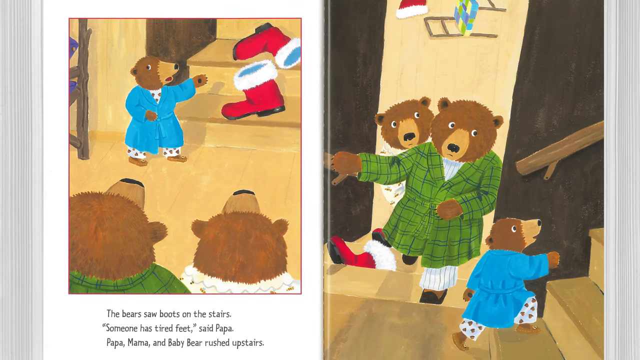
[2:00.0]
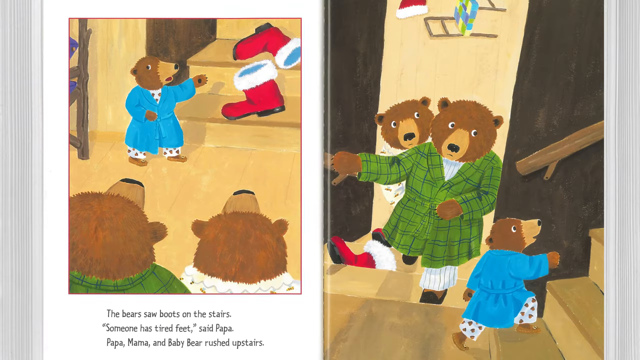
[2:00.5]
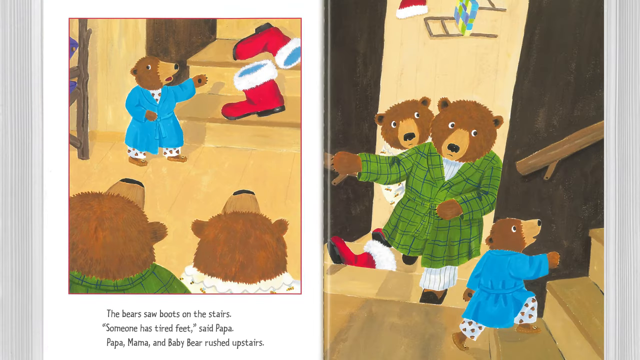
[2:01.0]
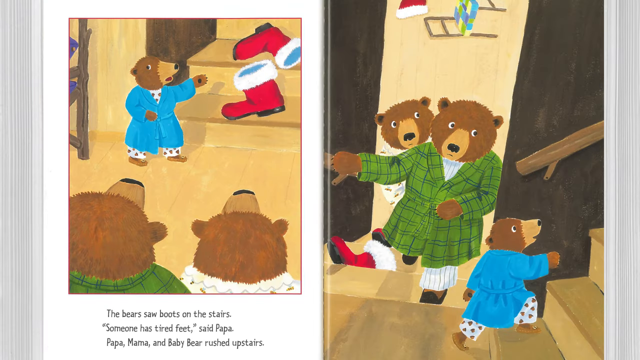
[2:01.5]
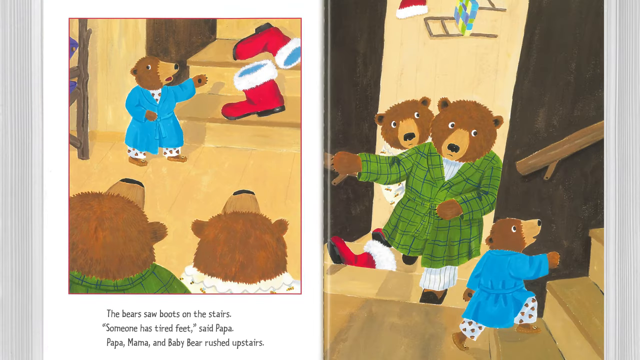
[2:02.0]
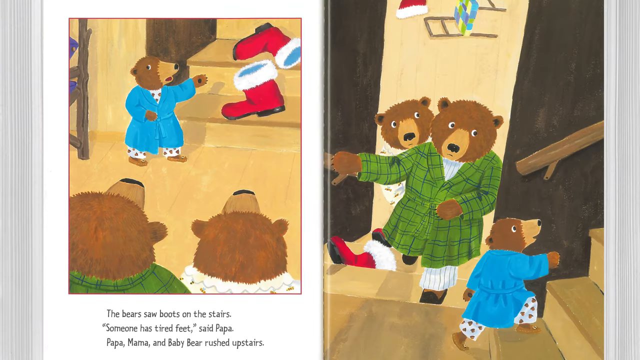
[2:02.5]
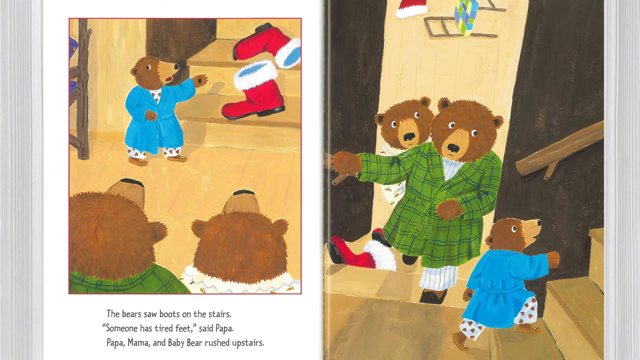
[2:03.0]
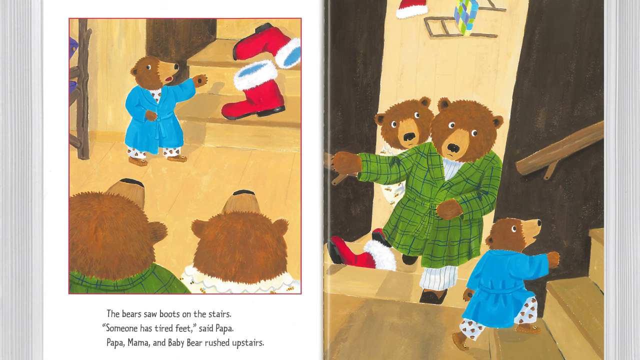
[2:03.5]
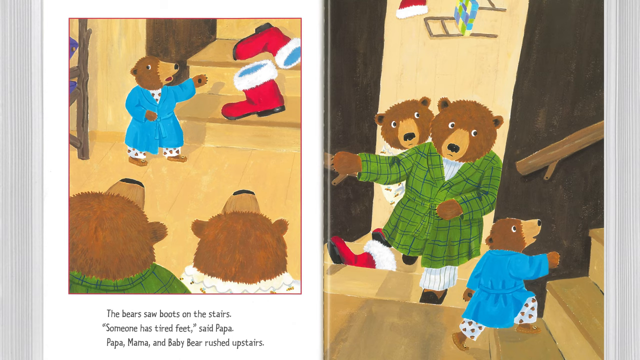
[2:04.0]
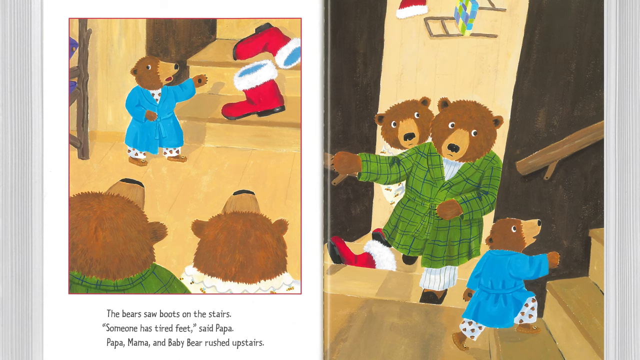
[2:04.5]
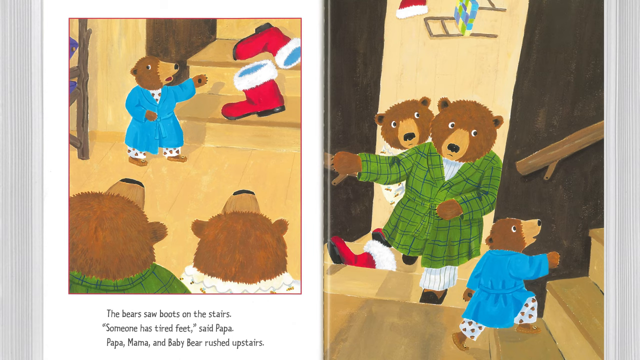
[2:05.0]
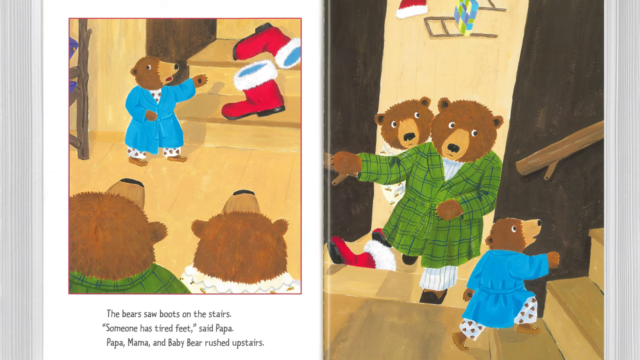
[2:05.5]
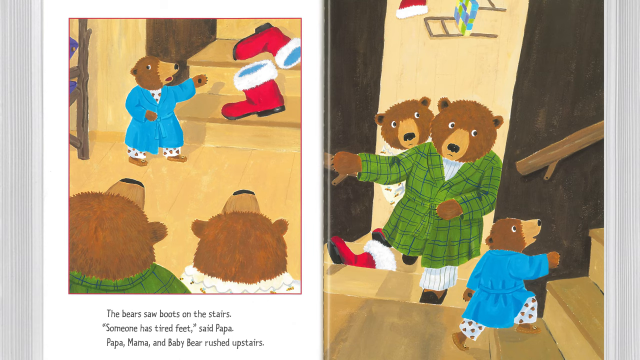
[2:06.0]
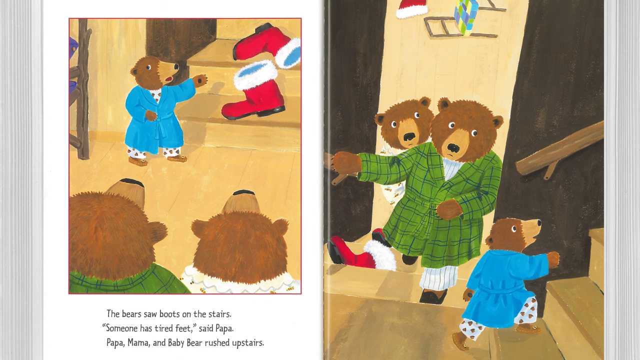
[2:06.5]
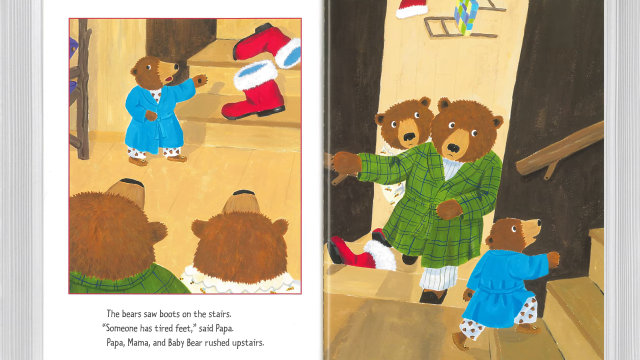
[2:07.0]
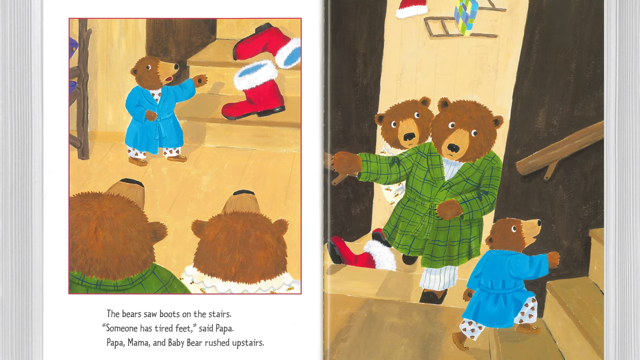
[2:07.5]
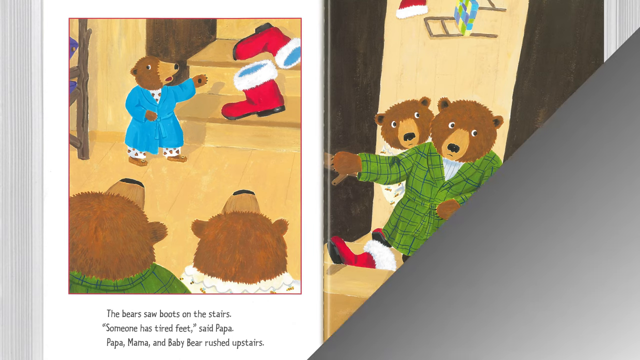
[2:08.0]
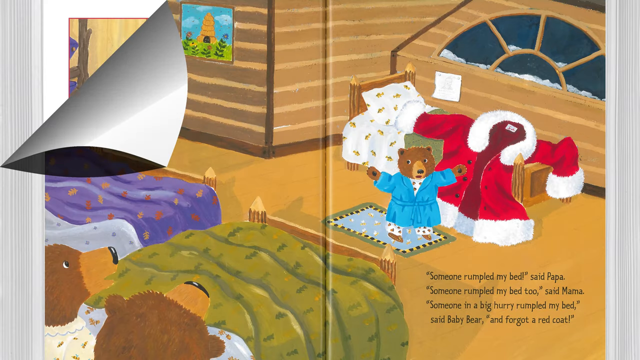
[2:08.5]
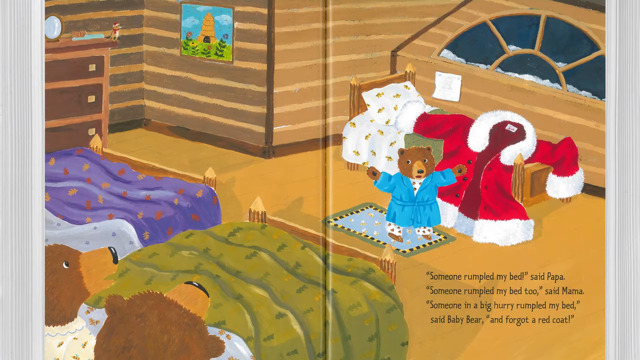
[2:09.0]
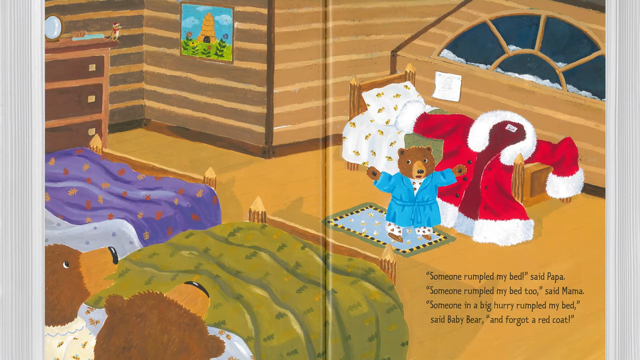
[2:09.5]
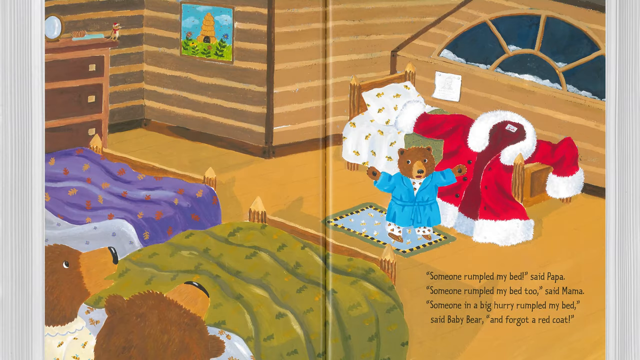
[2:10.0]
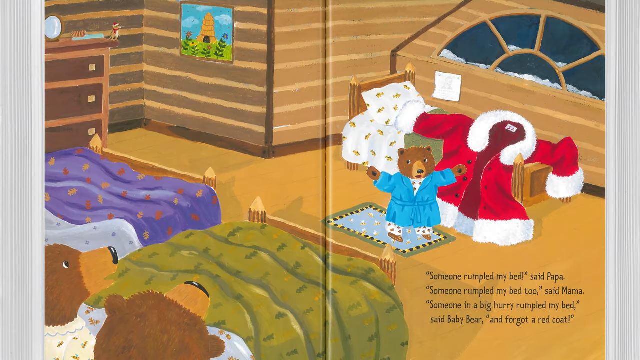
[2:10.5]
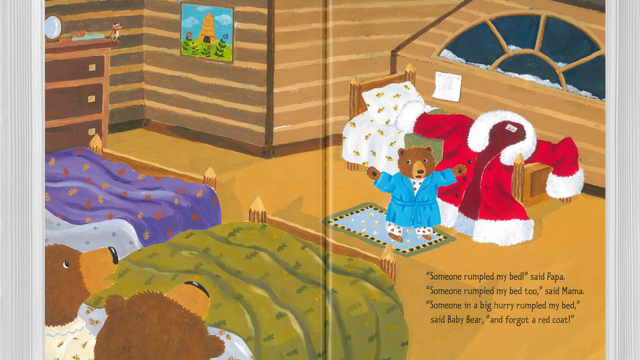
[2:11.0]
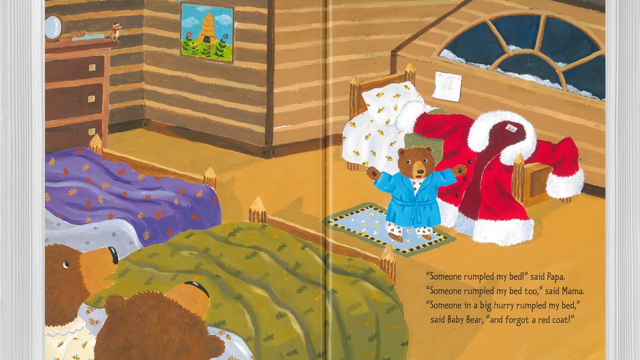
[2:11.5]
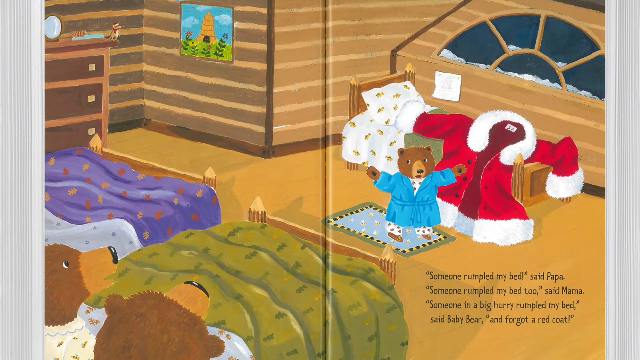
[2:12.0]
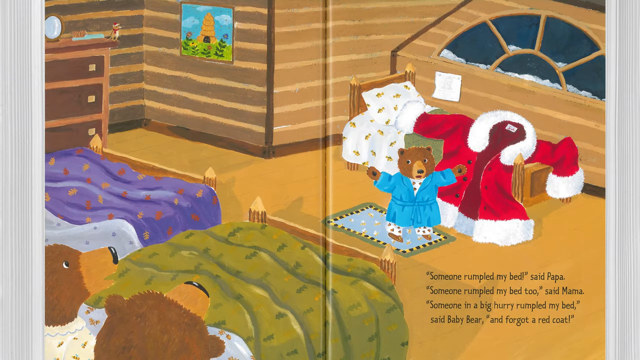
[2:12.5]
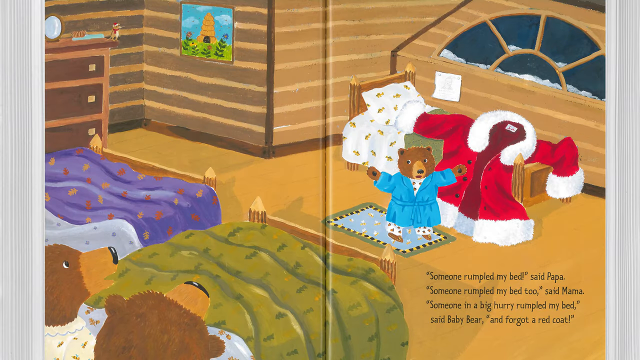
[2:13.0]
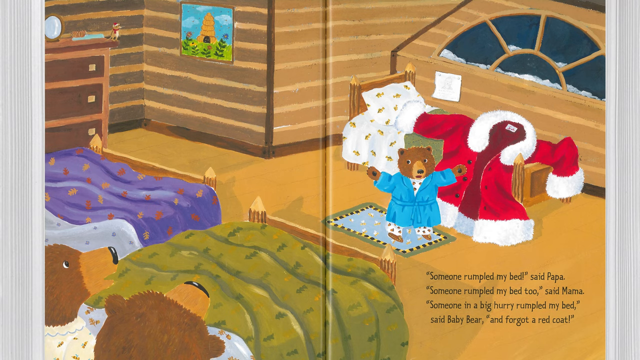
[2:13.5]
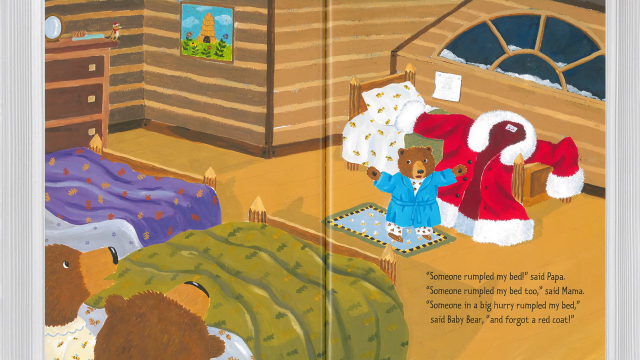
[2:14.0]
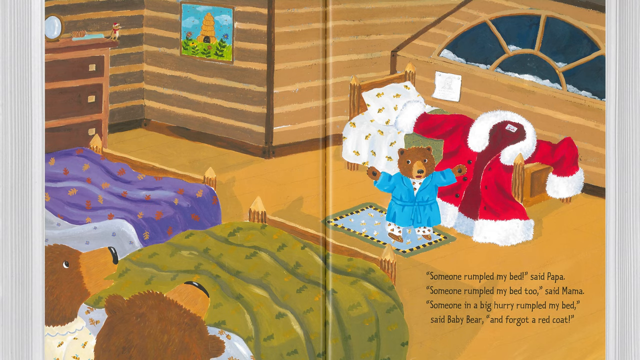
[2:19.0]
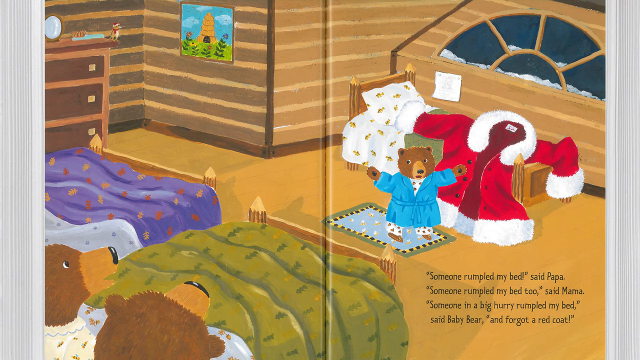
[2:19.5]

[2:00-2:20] The bears arrive upstairs in their bedroom. There is a window overlooking the dark sky, a wooden dresser, a painting on the wall, and three beds: two big beds next to each other for Papa and Mama Bear, one with a green blanket and the other with a blue blanket, and a small bed opposite the big beds with a white blanket. The bears look very shocked. Papa and Mama Bear stand next to each other while Baby Bear is at his bed, pointing at a letter on it. "Someone rubbed on my bed," says Papa. "Someone rubbed on my bed, too," says Mama. "Someone in a big hurry rubbed on my bed," says Baby Bear, "and forgot a red coat."